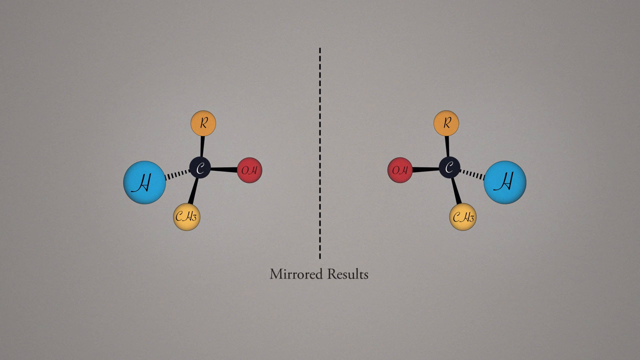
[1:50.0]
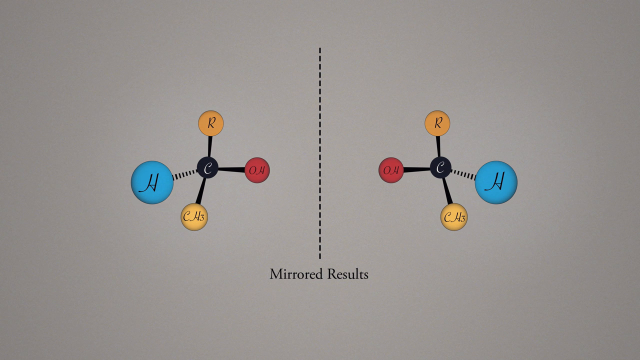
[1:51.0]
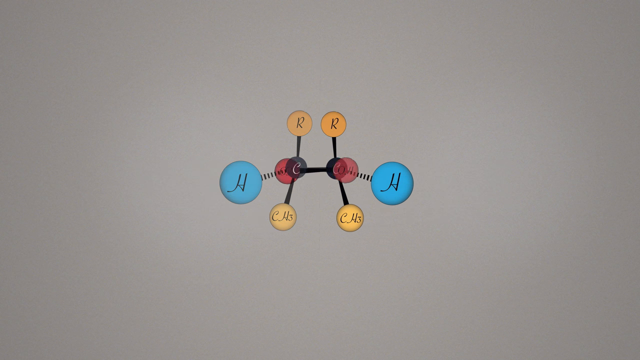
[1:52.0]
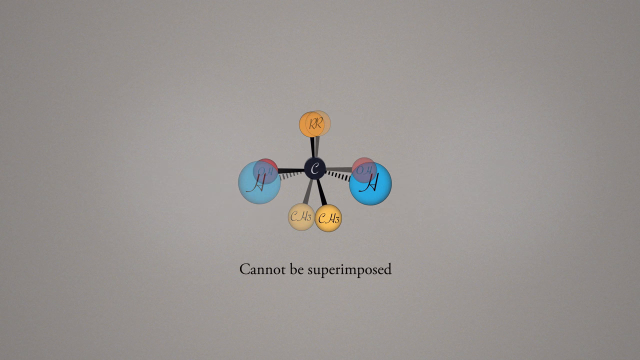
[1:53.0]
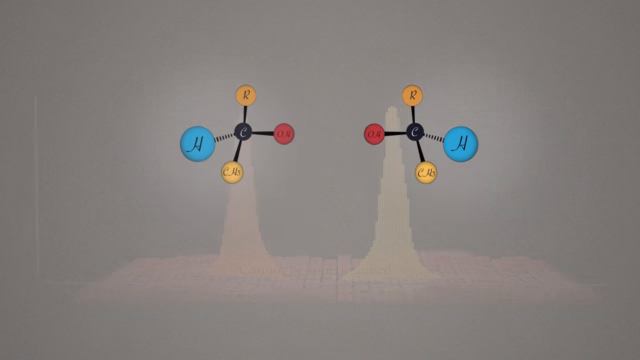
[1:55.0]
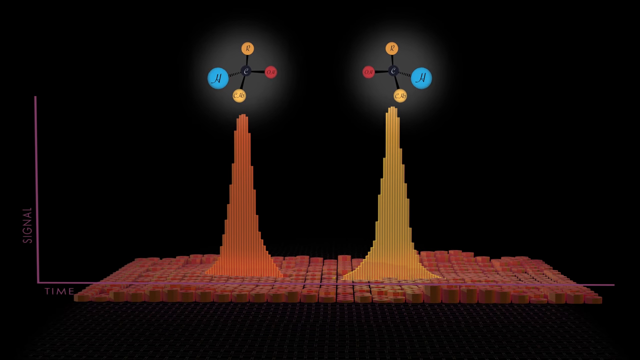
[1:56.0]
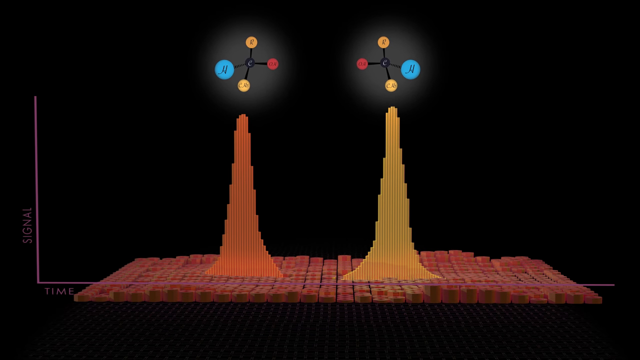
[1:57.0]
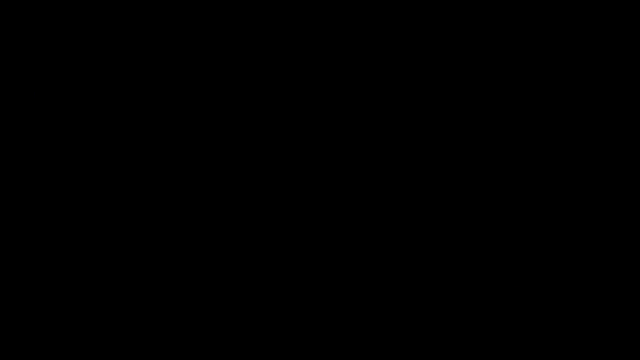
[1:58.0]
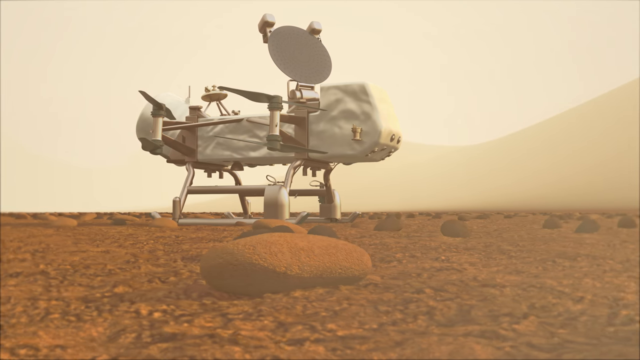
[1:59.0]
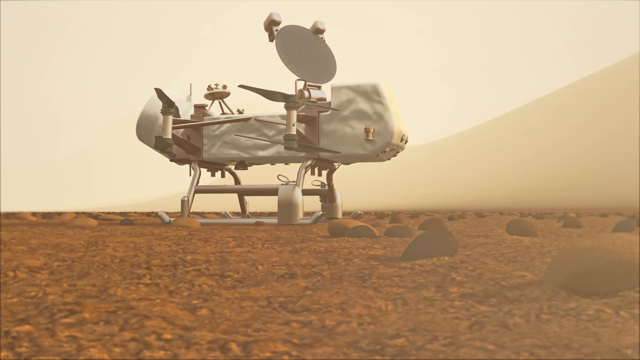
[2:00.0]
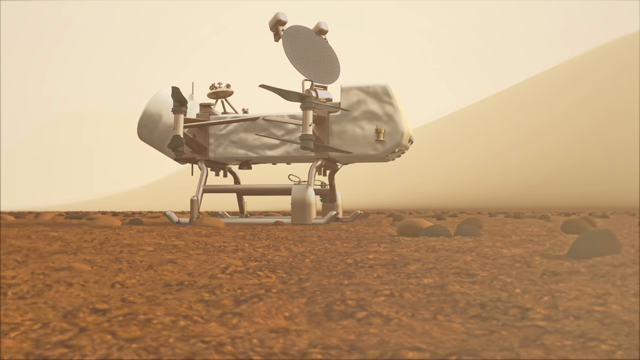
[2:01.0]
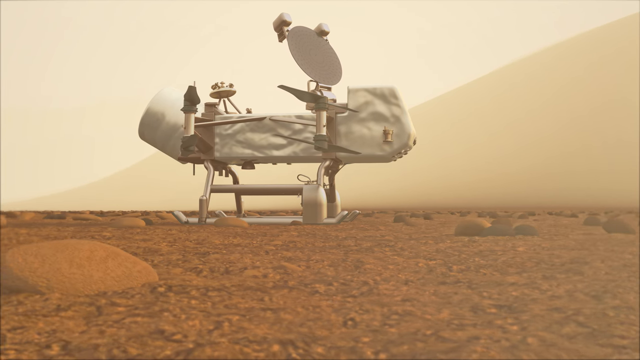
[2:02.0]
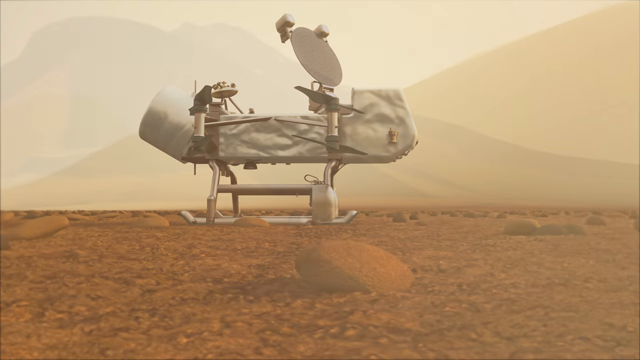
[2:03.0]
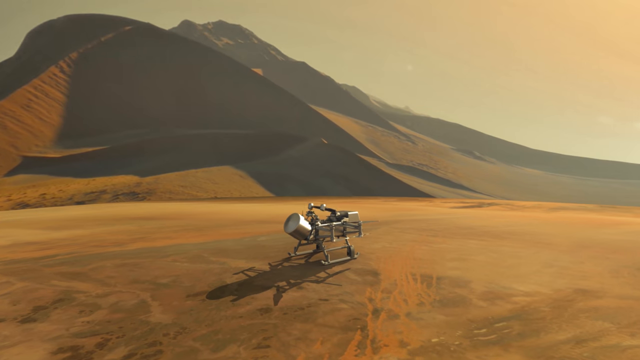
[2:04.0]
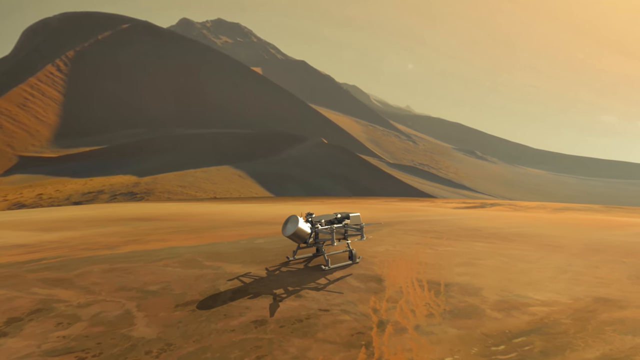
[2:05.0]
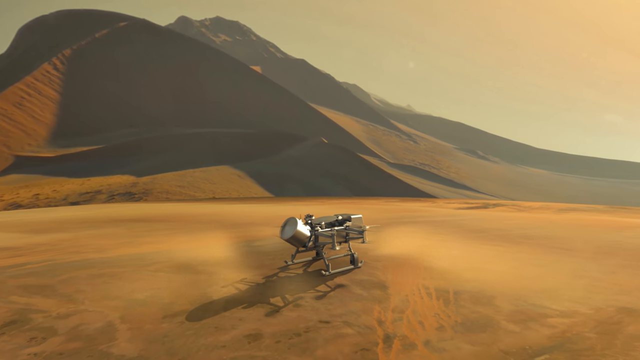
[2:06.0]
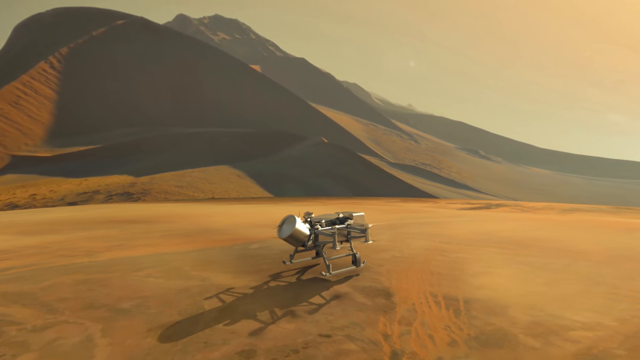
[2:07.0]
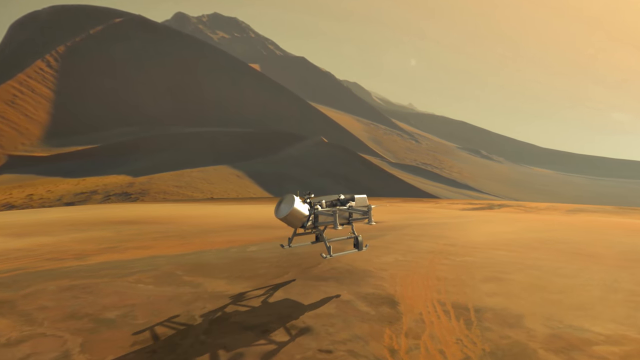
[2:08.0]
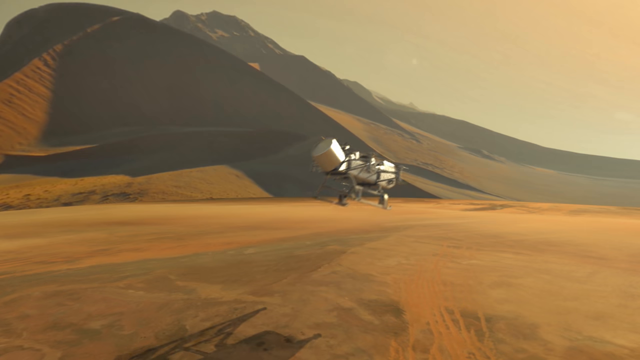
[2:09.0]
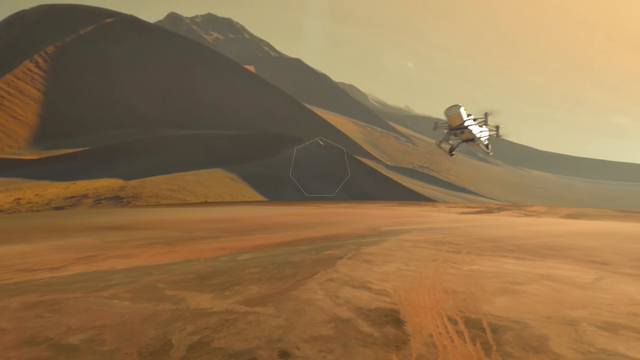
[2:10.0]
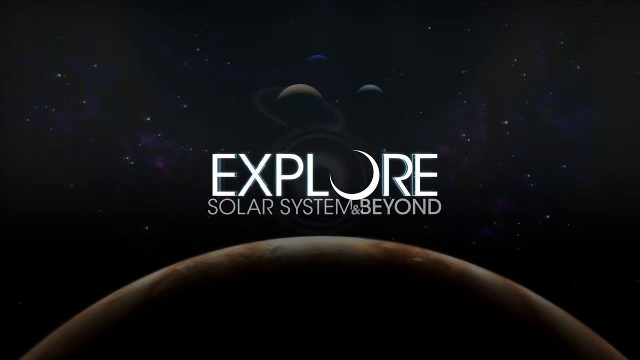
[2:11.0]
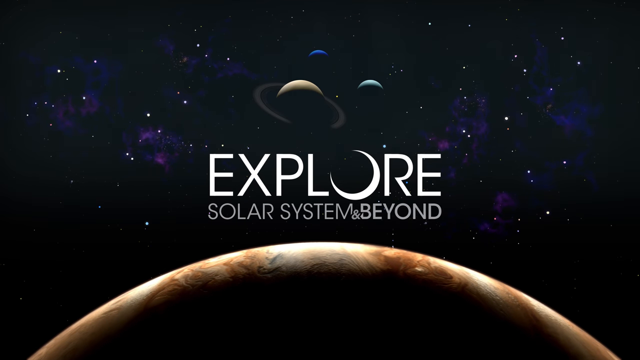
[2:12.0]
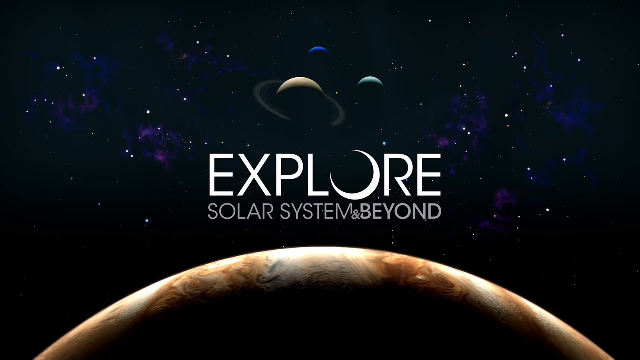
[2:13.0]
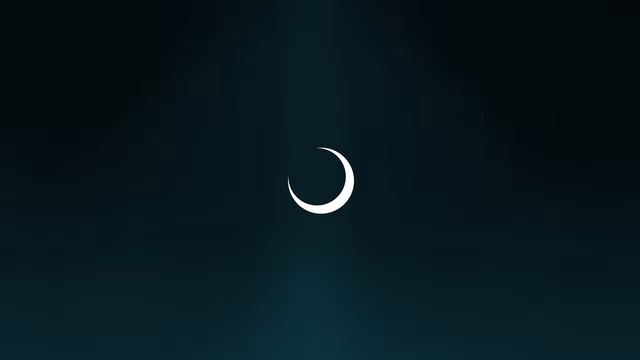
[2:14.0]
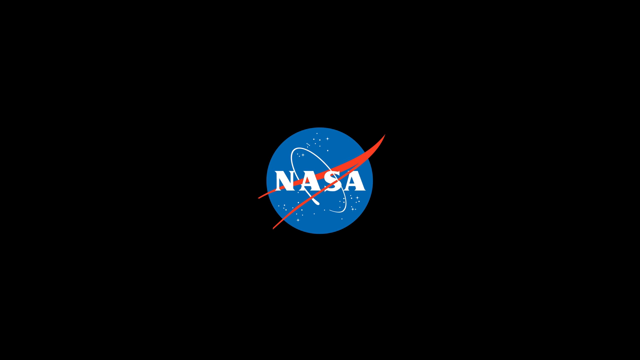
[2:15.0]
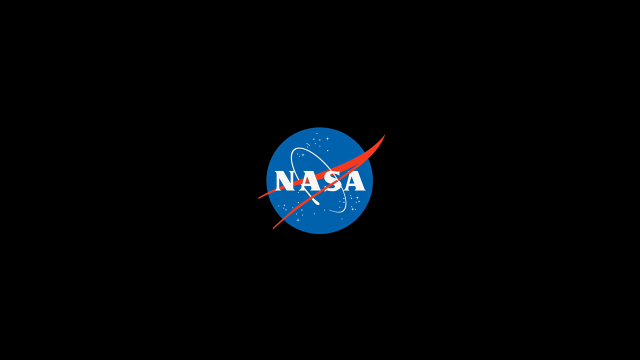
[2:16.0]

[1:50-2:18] The molecules on the left and right start coming together in the center, where a dotted vertical line is labeled "mirrored results", and they almost merge into one visual representation. The view returns to the earlier screen with the red bottom, the two mountain-like shapes, and the molecules on top. The scene then goes back outside on the planet, at roughly ground level, with rocks and dirt on the ground and the drone-like device. The camera moves right to left, and then looks down at the drone. The drone appears to take off, moves forward, starts moving toward the right, and then flies off toward the upper right-hand corner of the screen. Finally, a dark background with stars appears, with text in the center reading "Explore Solar System and beyond". Beneath it, apparently the top third of a brown and gray planet is visible.